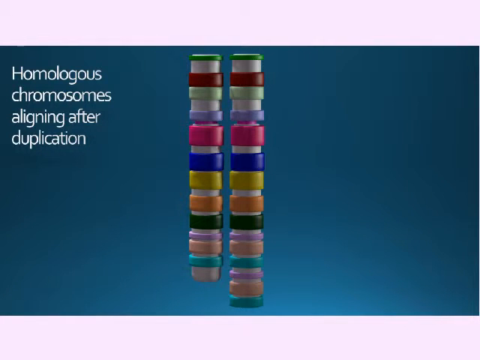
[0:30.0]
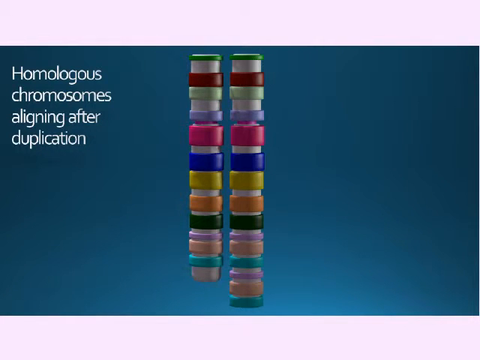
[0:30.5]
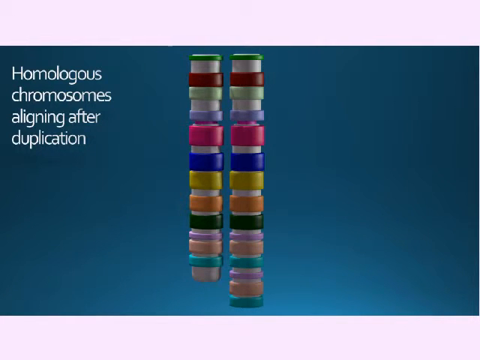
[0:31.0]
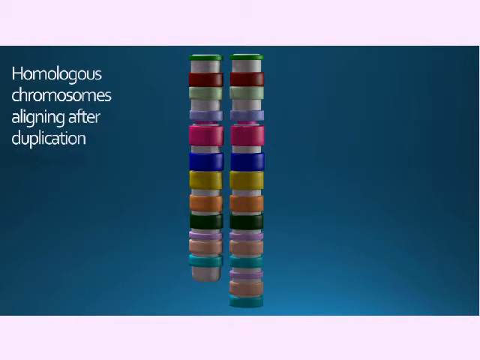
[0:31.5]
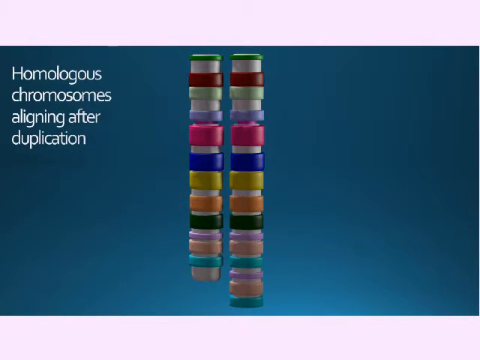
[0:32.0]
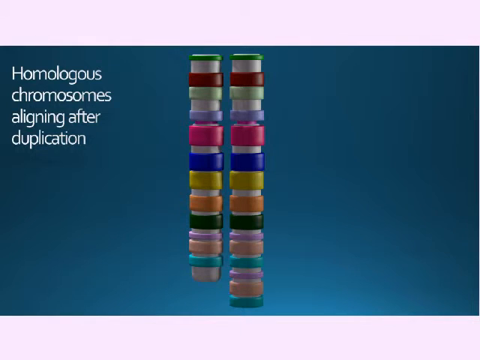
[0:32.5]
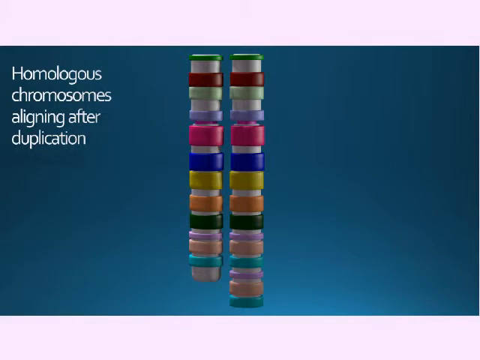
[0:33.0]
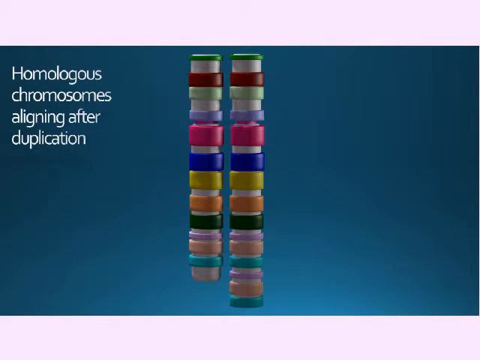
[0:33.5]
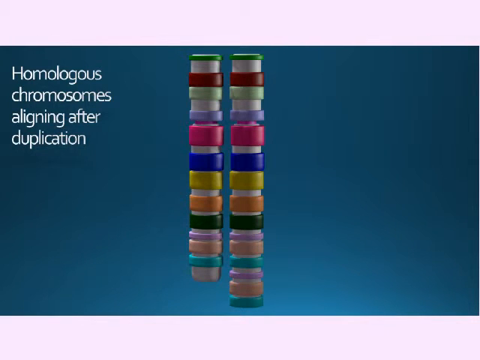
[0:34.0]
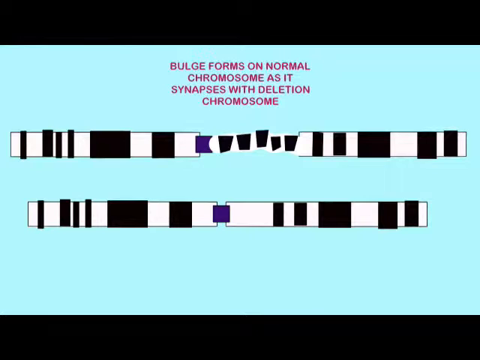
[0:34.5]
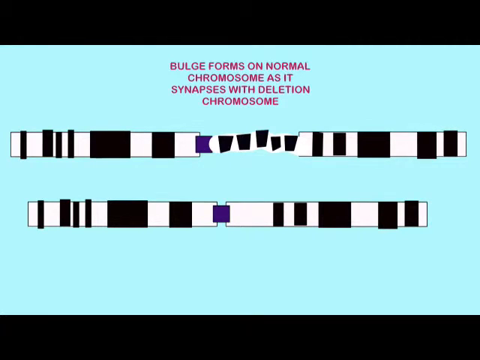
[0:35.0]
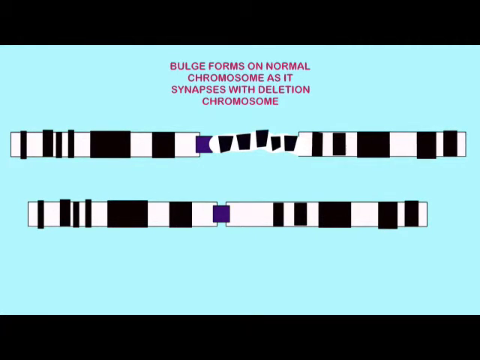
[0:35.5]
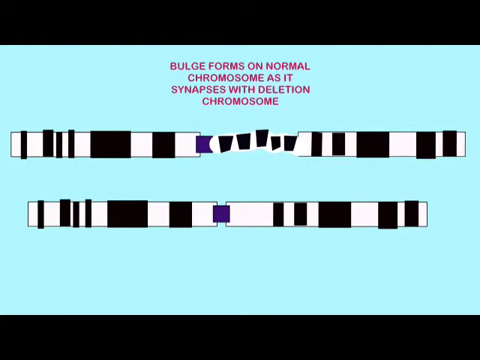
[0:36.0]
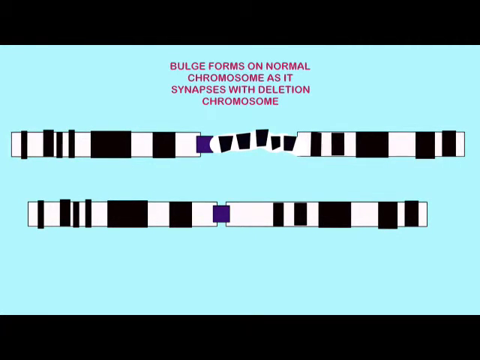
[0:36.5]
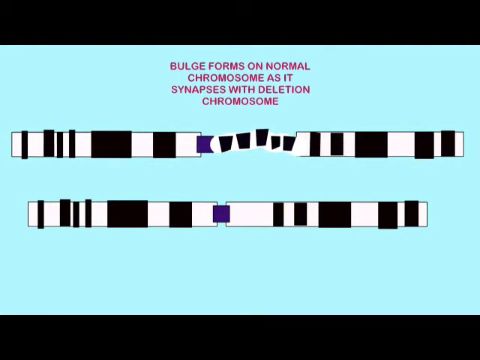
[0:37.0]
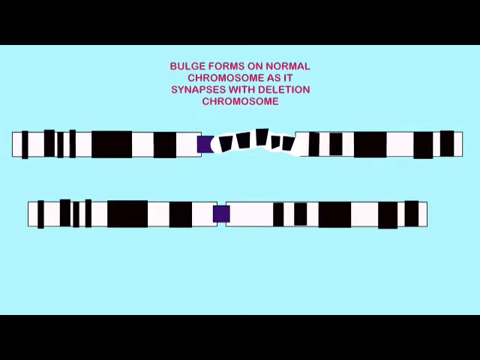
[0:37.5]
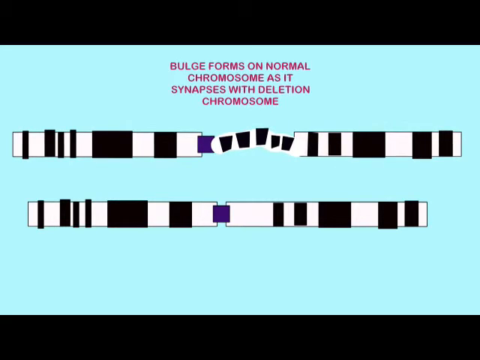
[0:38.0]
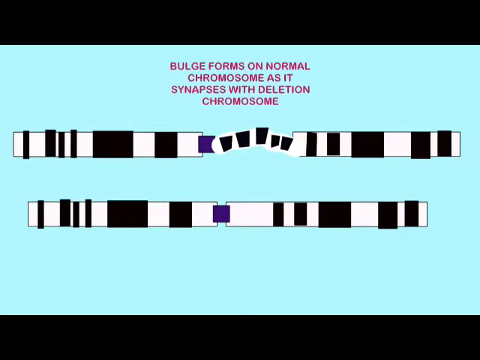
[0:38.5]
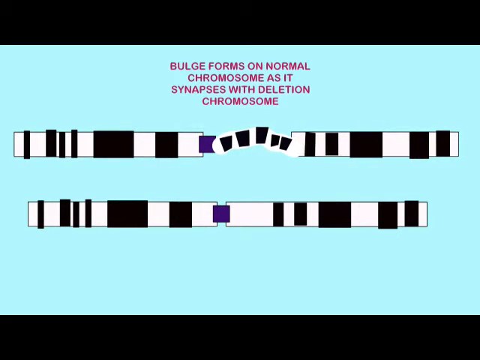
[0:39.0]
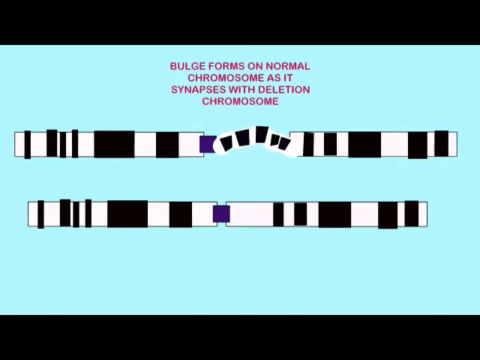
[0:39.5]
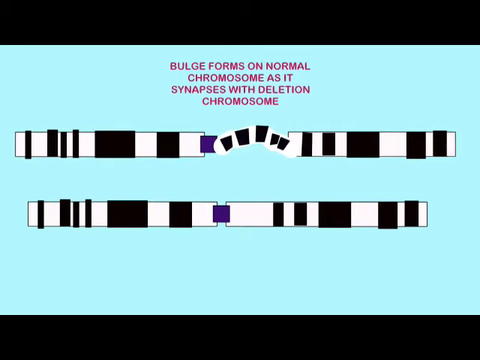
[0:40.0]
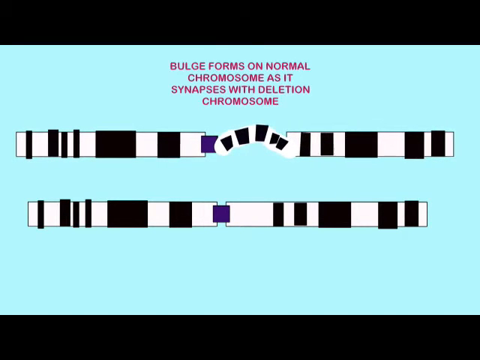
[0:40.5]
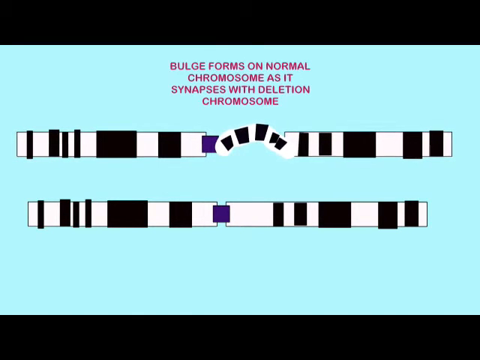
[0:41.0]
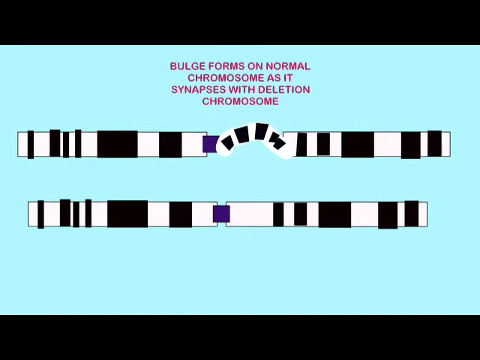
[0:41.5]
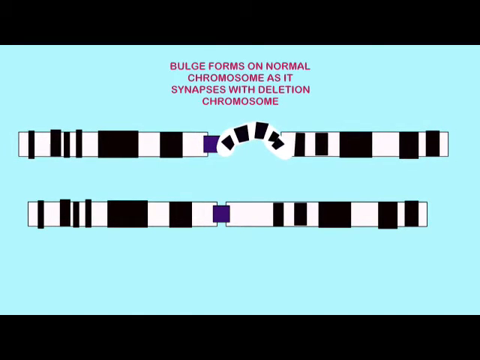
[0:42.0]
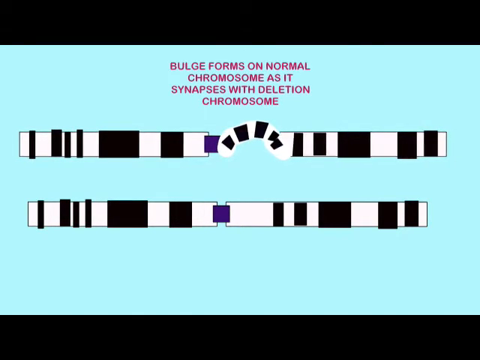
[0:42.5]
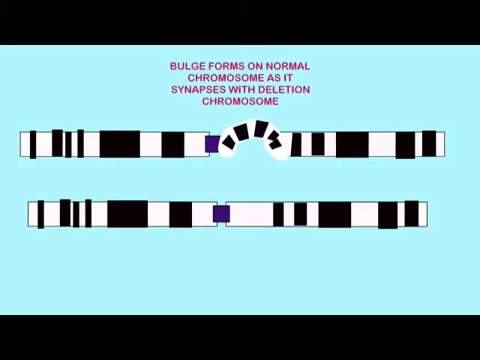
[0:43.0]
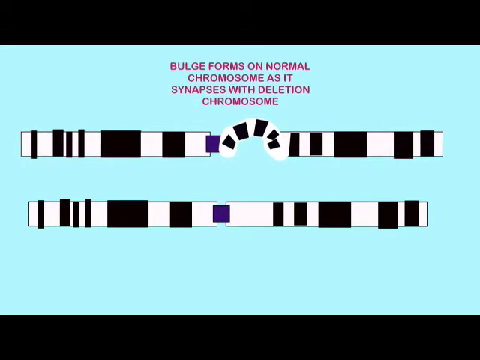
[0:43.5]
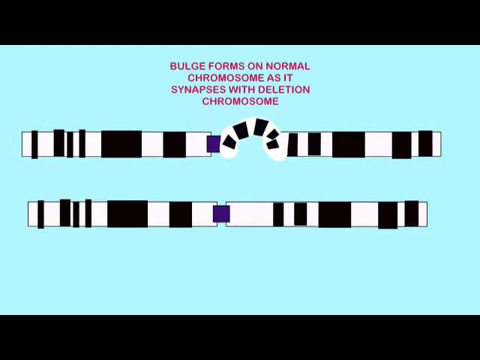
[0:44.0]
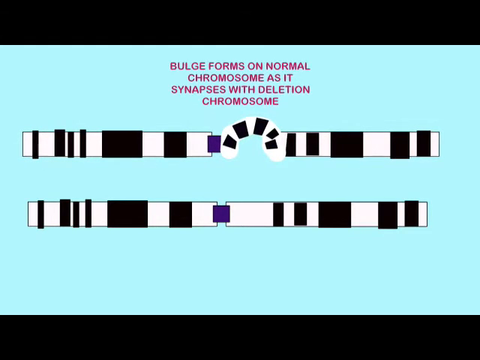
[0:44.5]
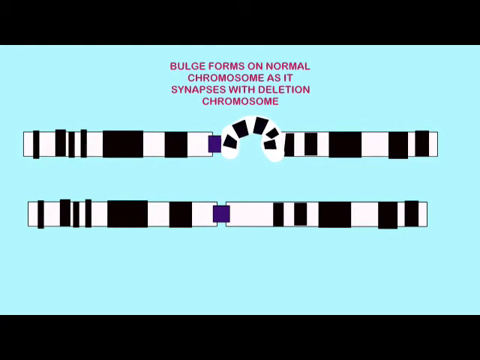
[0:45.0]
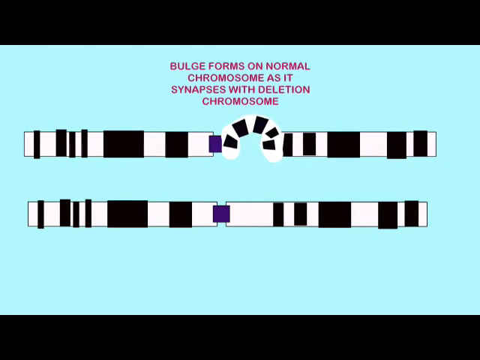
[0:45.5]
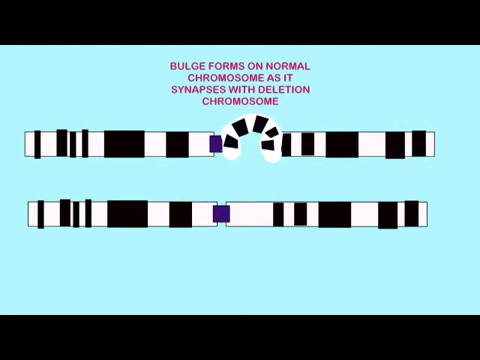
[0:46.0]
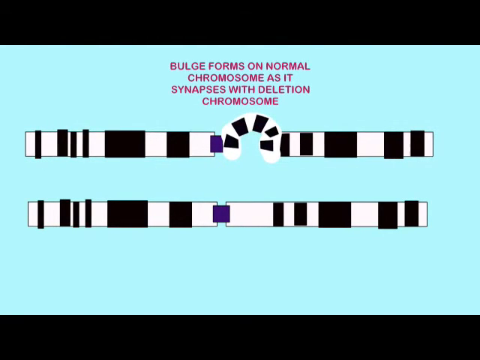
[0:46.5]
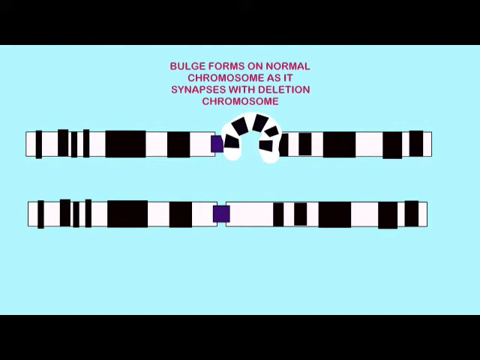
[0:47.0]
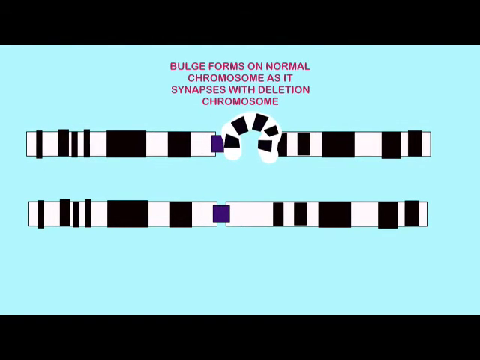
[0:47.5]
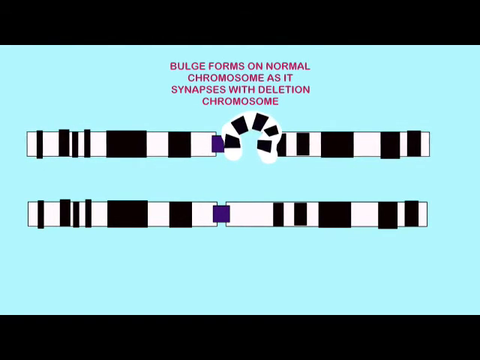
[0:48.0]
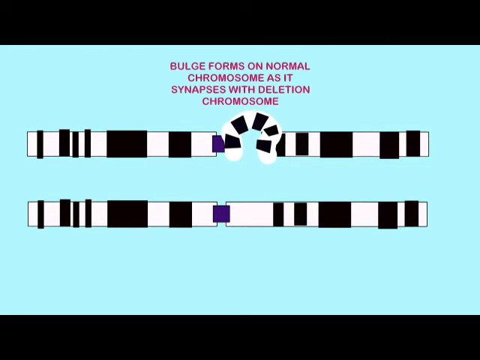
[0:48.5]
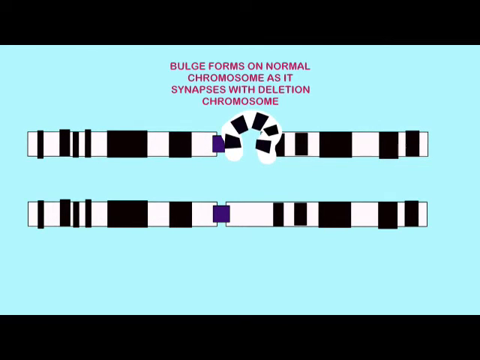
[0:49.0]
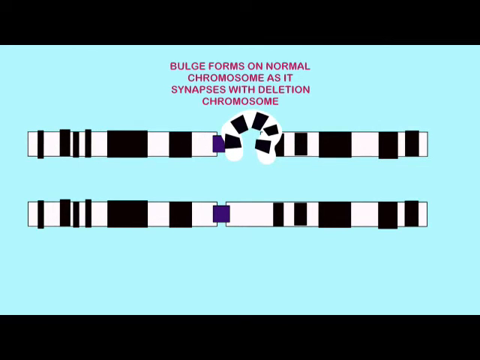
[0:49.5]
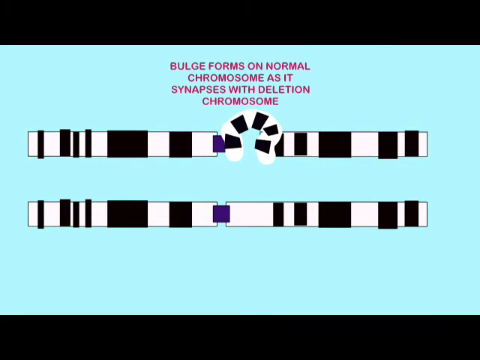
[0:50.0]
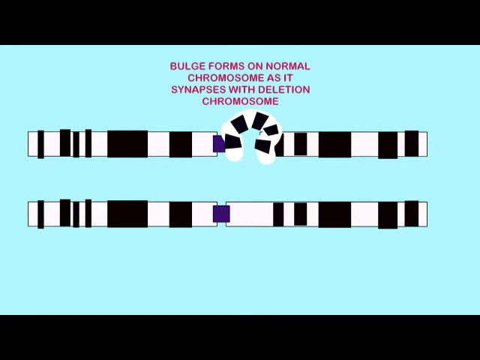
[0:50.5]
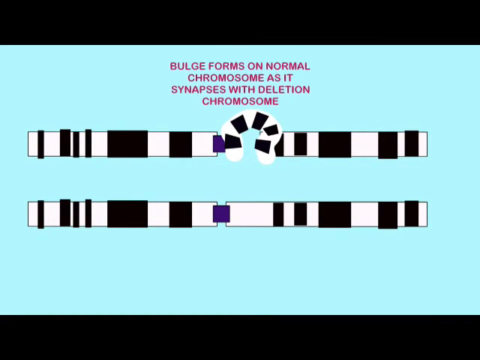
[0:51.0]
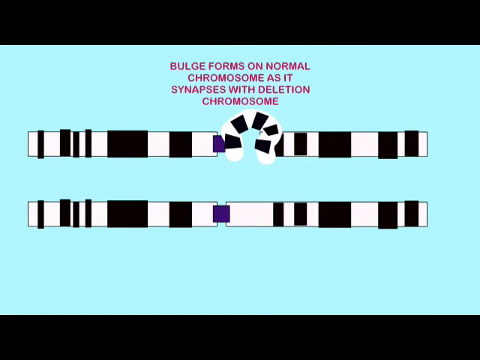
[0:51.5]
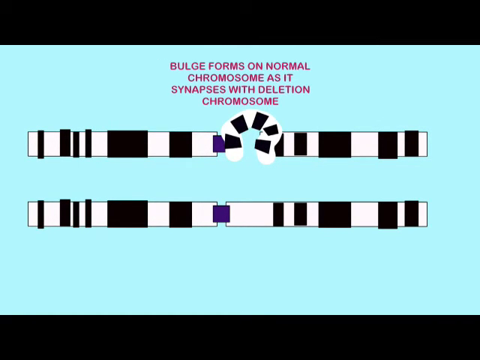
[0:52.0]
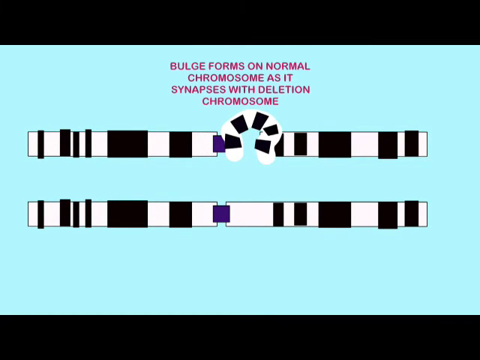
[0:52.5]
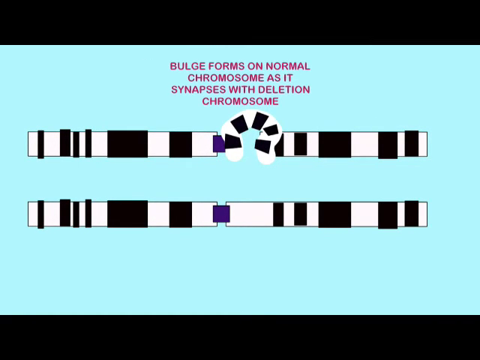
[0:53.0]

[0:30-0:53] A diagram shows homologous chromosomes aligning after duplication. On a blue background are two white rods with different color bands around them, the bands of different sizes, some thicker and wider and some smaller and thinner. Both rods have the same color bands, except the rod on the right is slightly longer at the bottom, where it has an additional light pink, light peach and teal color band. The screen then changes to a light blue background with two long rectangular white diagrams that appear to have black rectangular bands around them, some thicker and some thinner. On the top bar, the left and right sides are kind of moving in and pushing on the middle part, which is a bit thinner than the outer parts of the rectangle. As they push in, the thinner middle part kind of bends up, forming a bulge, until both sides are almost completely touching each other with just a round bulge in the middle. At the top, dark pink text reads "bulge forms on normal chromosome as it synapses with deletion chromosome."